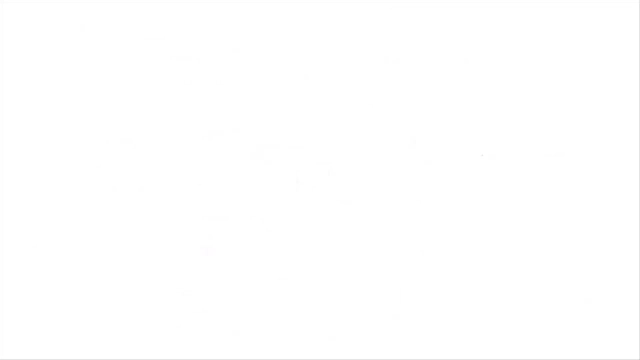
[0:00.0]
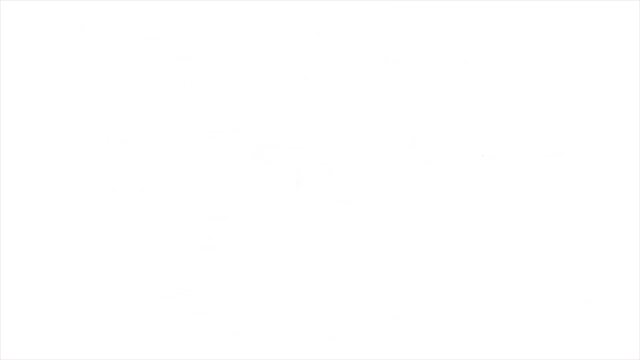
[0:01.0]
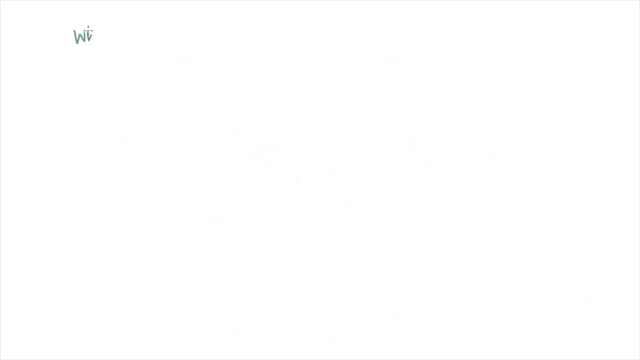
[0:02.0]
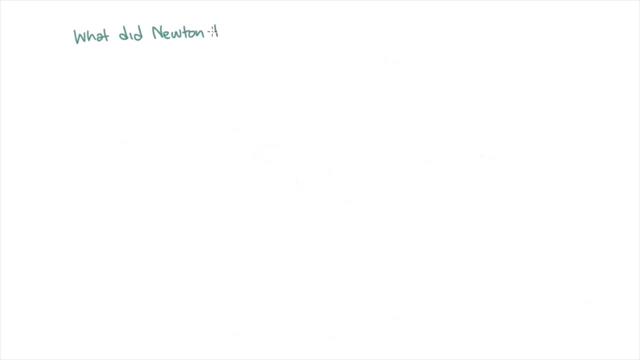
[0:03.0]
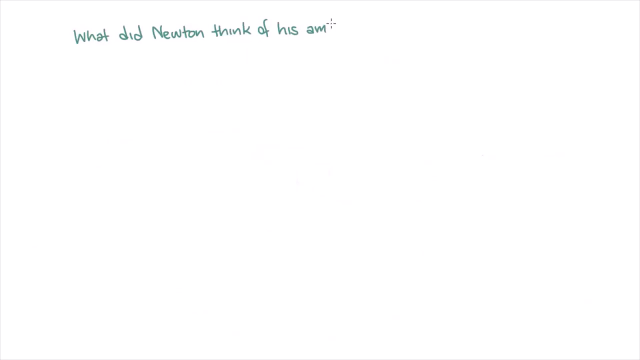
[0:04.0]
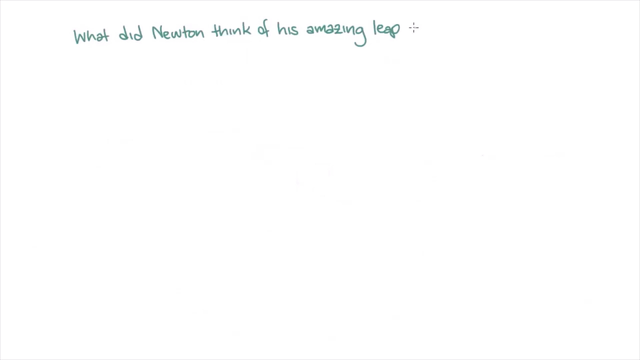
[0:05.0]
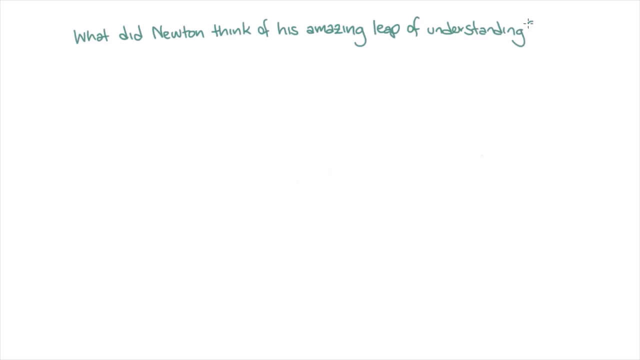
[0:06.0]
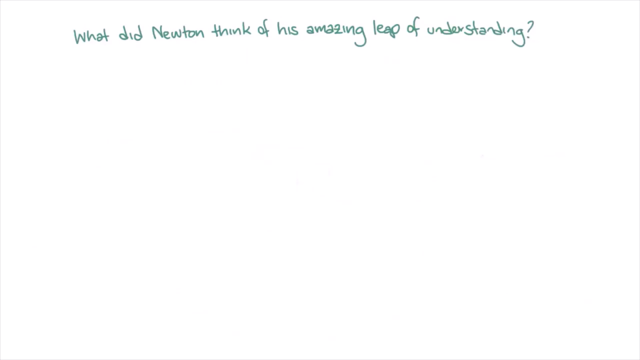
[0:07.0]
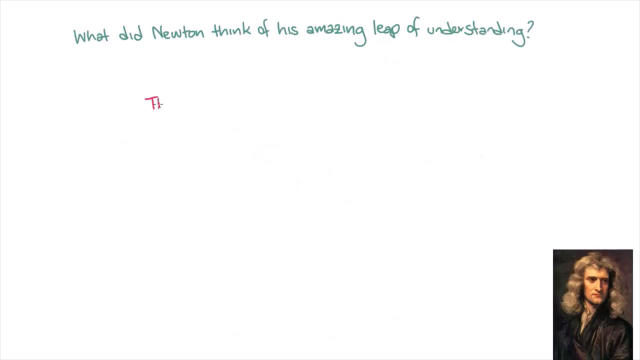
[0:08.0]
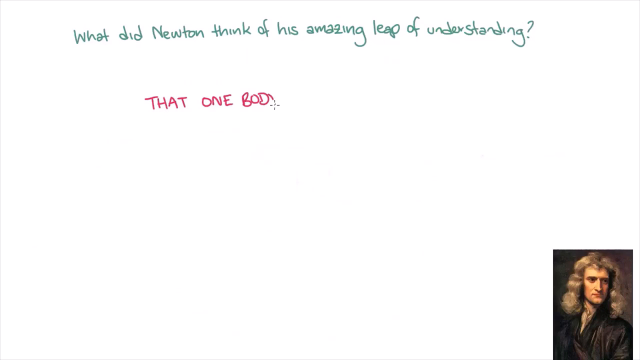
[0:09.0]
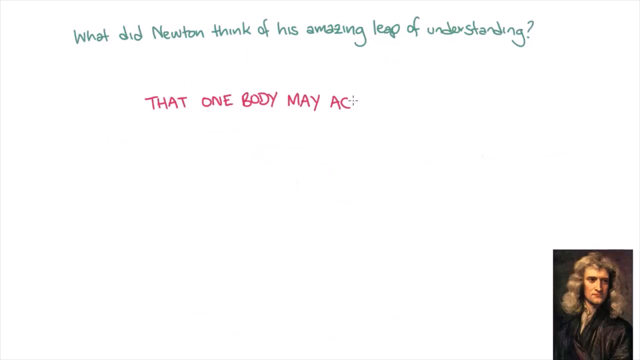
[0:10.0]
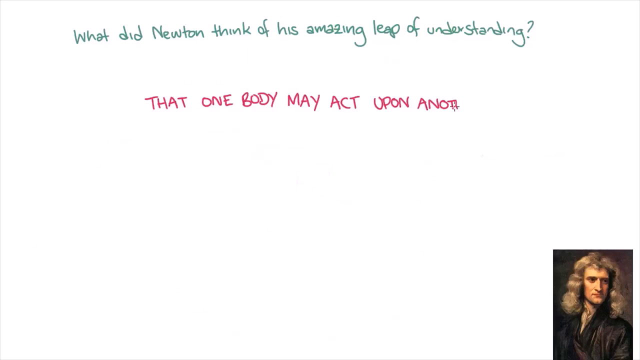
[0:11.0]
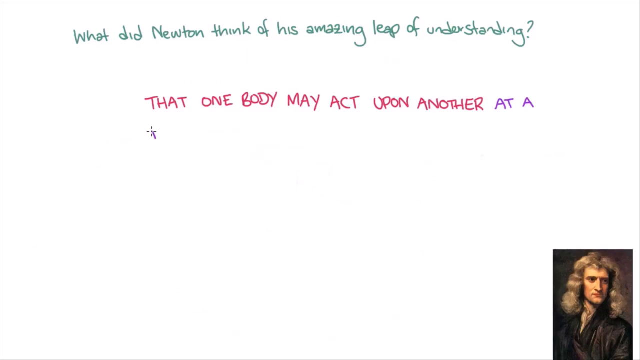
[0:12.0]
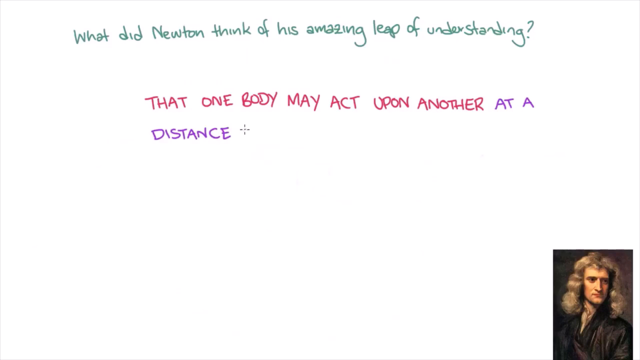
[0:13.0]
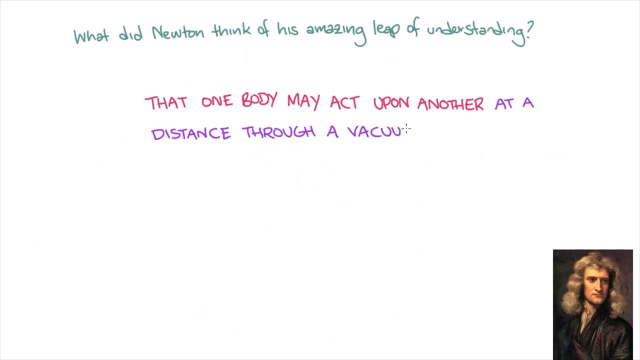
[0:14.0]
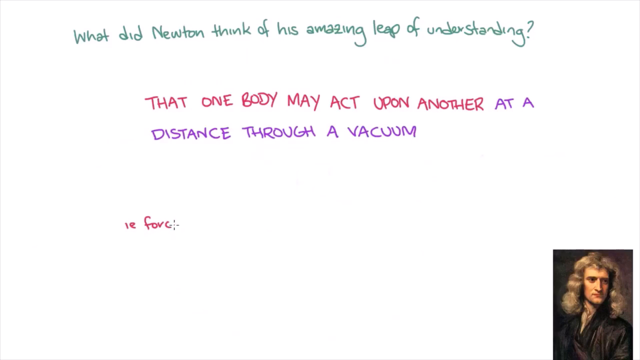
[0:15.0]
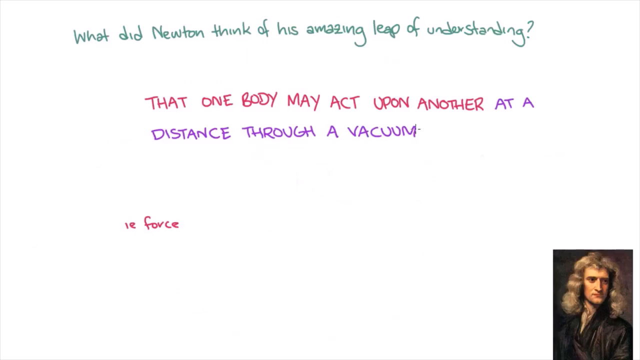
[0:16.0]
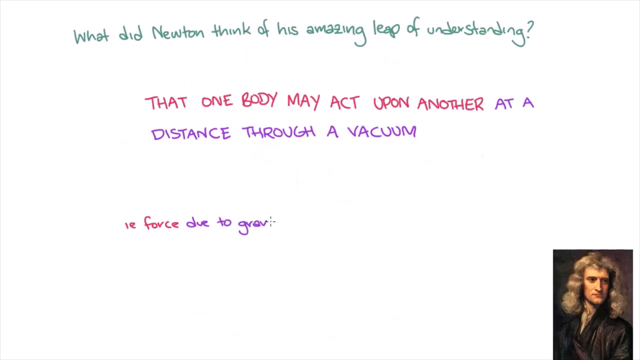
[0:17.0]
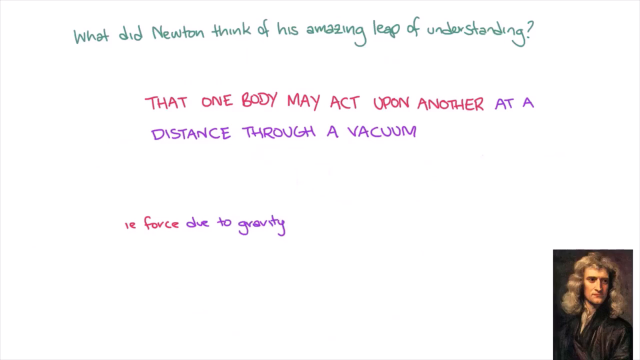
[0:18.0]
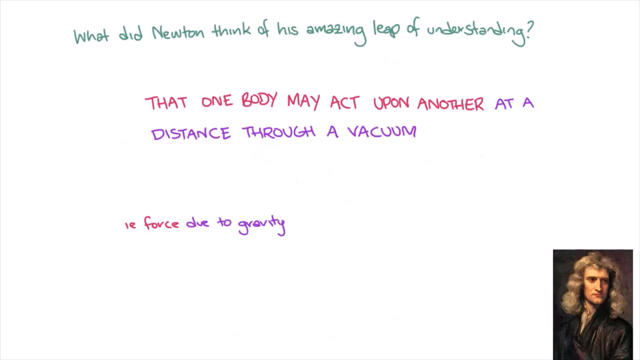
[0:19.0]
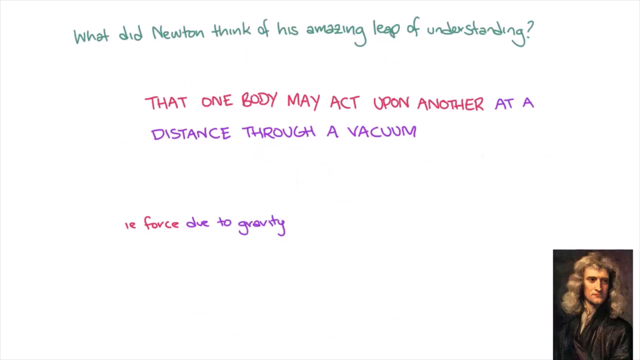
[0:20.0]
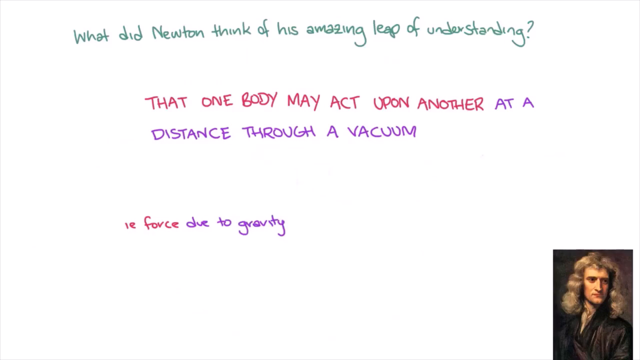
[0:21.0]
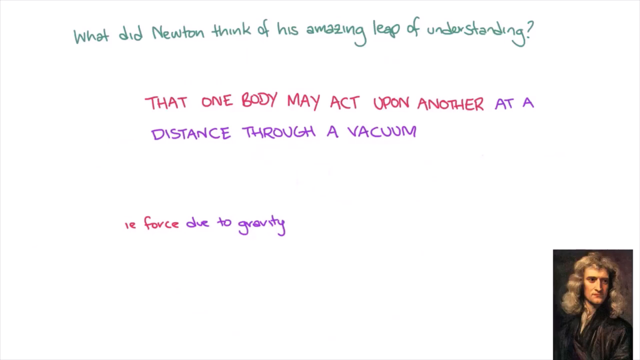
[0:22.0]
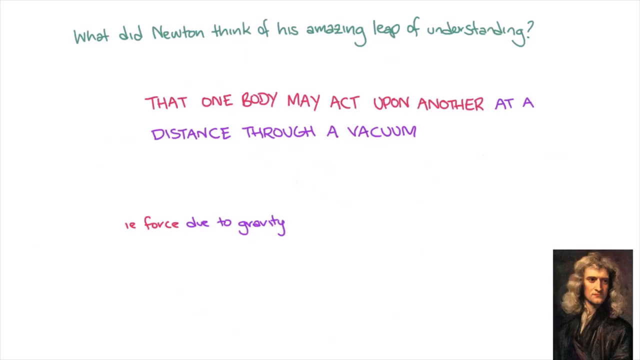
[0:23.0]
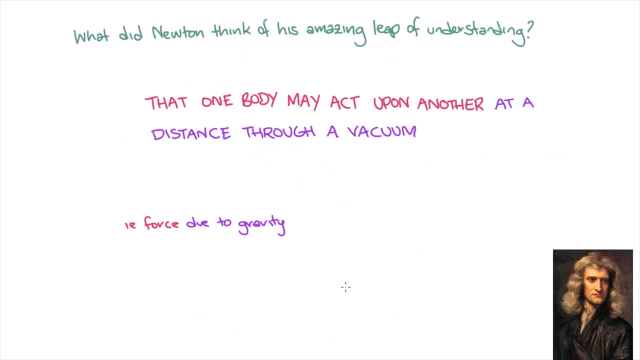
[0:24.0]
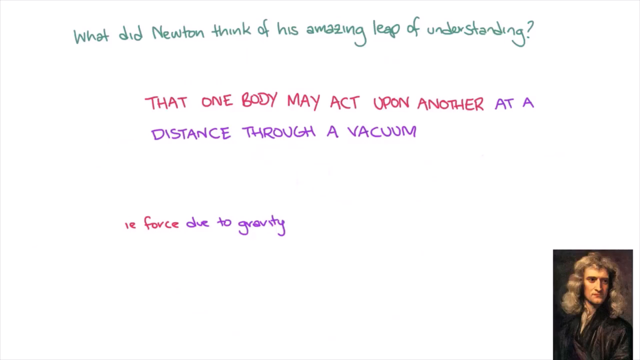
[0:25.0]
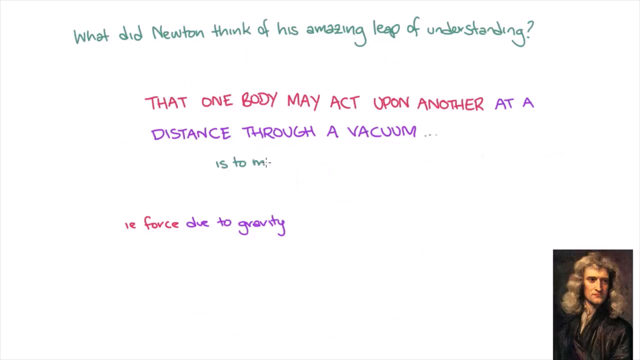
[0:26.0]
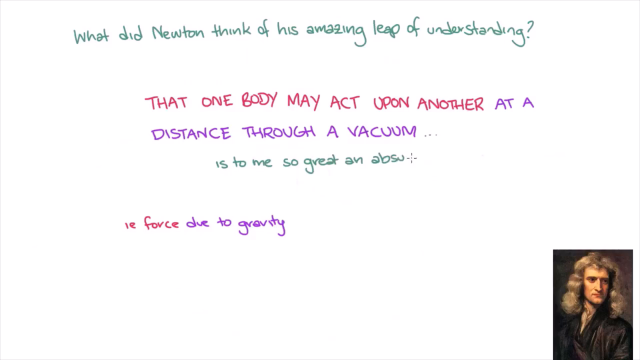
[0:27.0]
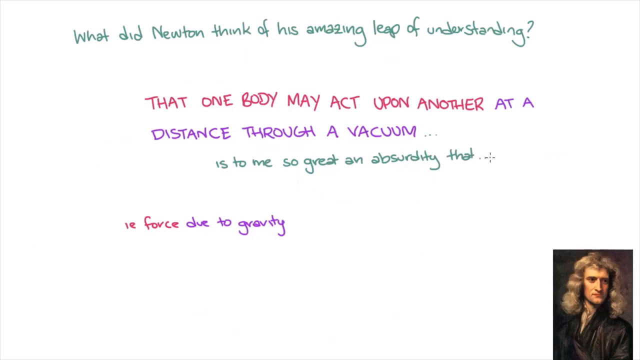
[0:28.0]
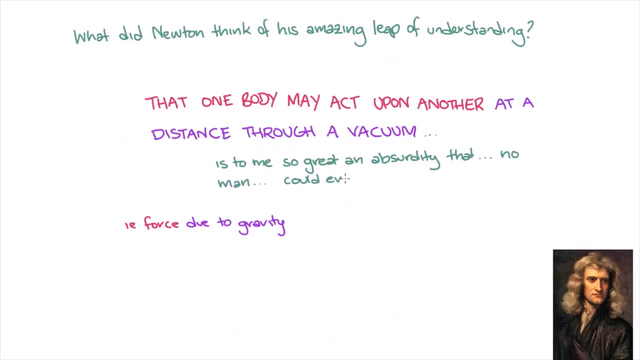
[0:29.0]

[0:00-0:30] The video opens on a white screen, and text is typed onto it starting at the top. The text reads "what did Newton think of his amazing leap of understanding?" with a question mark. A fairly small image of a historical figure then pops up in the bottom right corner; it looks like an 1800s-style picture. Below, the text says "that one body may act upon another at a distance through a vacuum." The words "force due to gravity" appear, written in either pink or purple text. For a few seconds the screen does not change, showing the white background with the new text in normal font size. New text then appears below the words "distance through a vacuum," reading "is to me so great an absurdity that no man could ever fall into it."